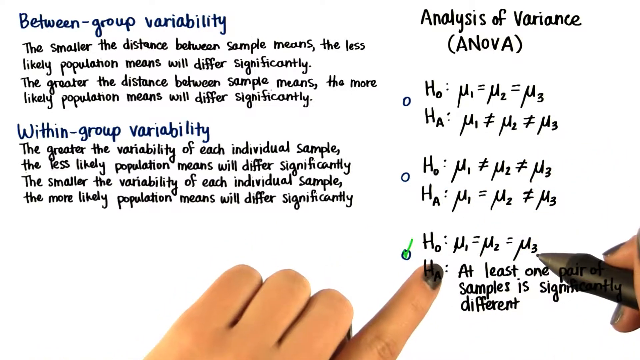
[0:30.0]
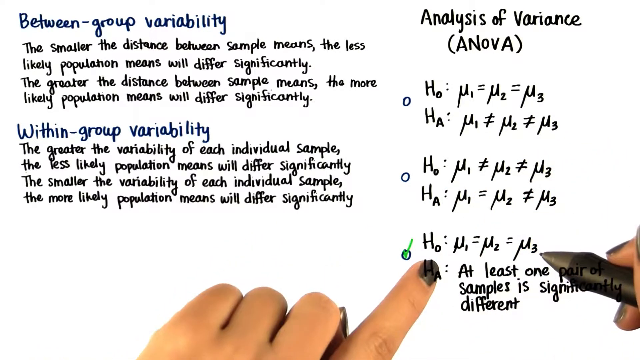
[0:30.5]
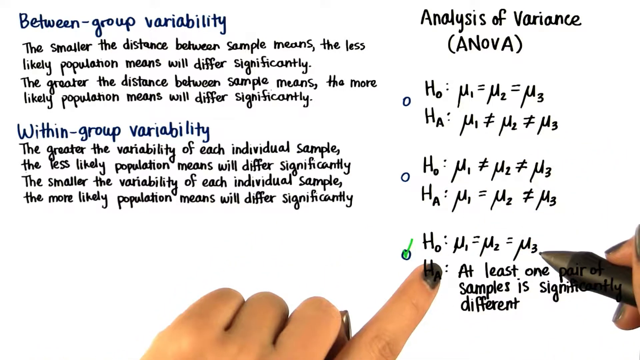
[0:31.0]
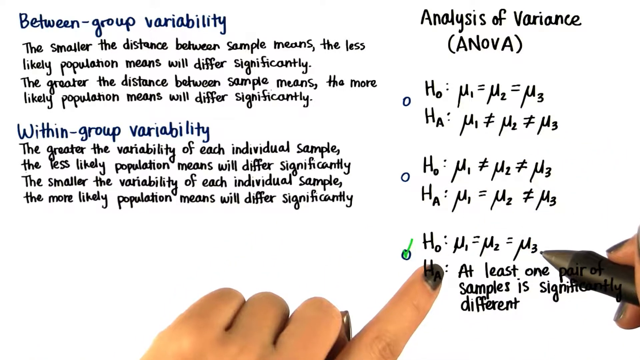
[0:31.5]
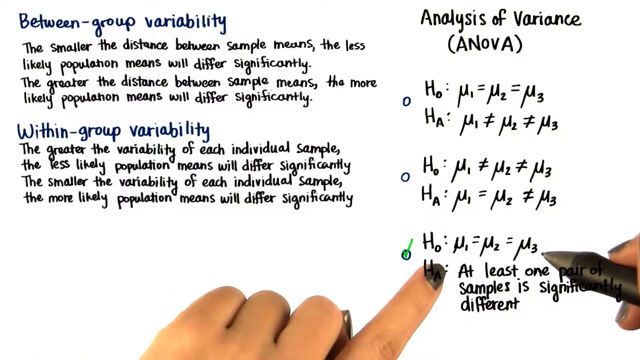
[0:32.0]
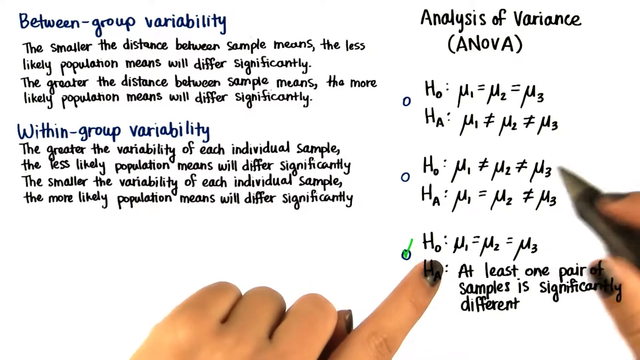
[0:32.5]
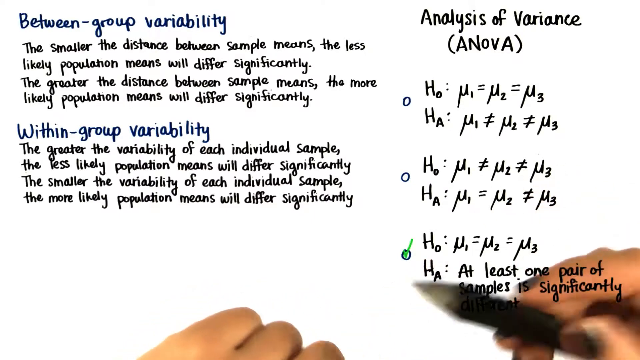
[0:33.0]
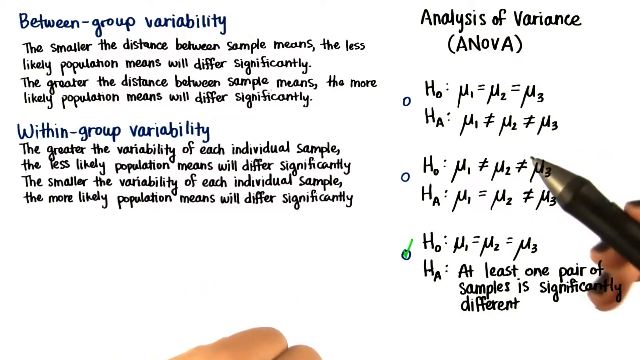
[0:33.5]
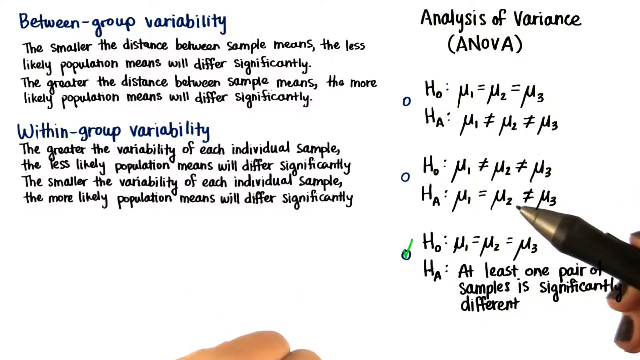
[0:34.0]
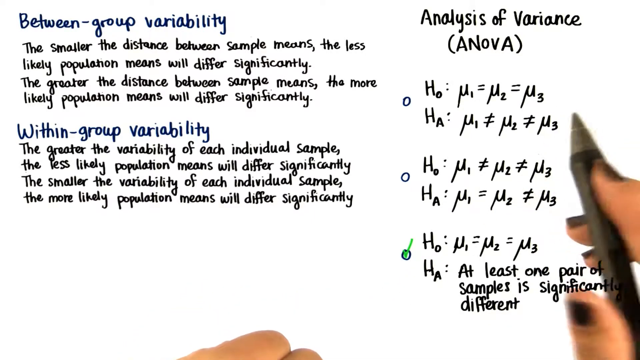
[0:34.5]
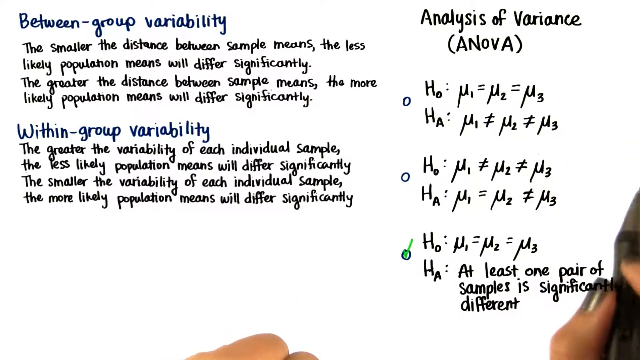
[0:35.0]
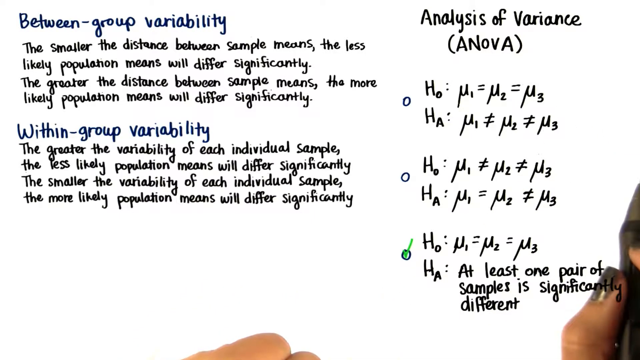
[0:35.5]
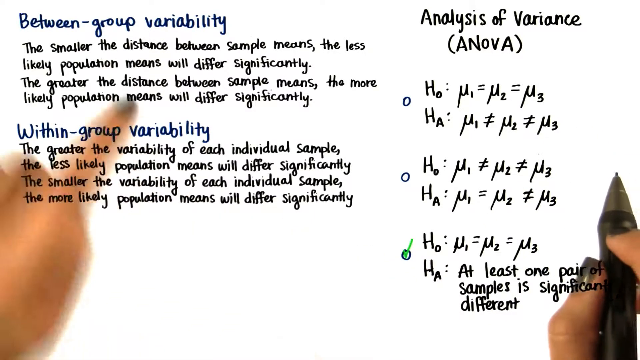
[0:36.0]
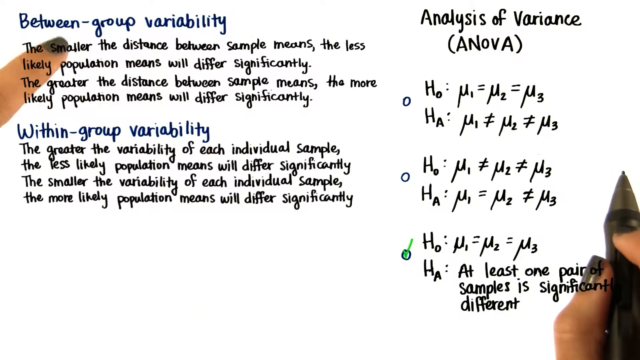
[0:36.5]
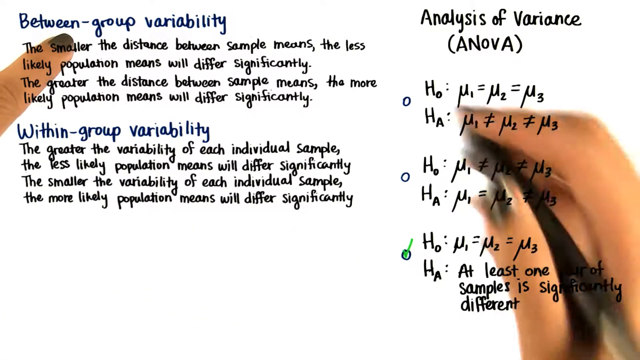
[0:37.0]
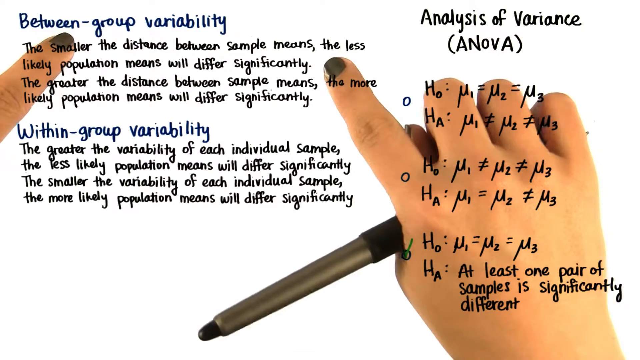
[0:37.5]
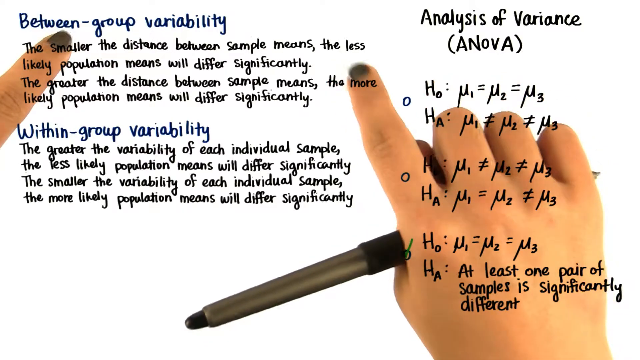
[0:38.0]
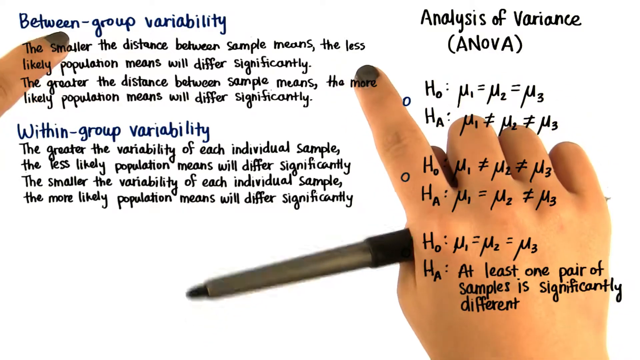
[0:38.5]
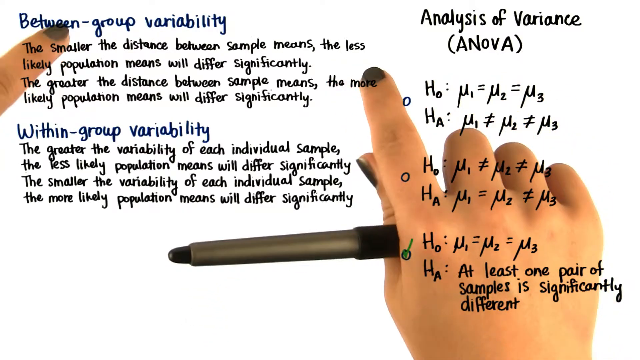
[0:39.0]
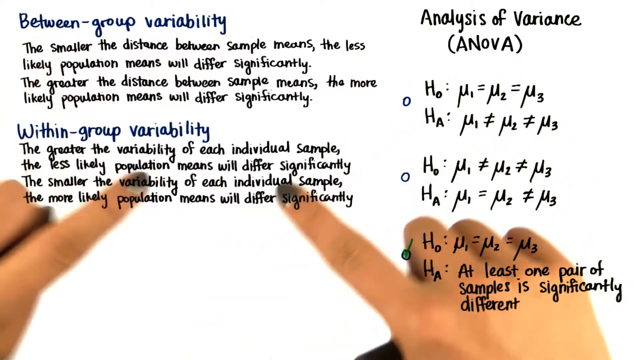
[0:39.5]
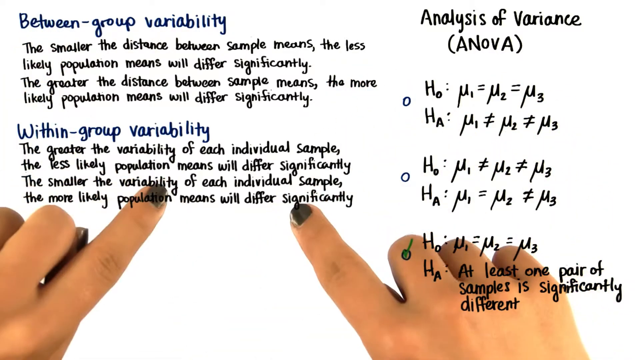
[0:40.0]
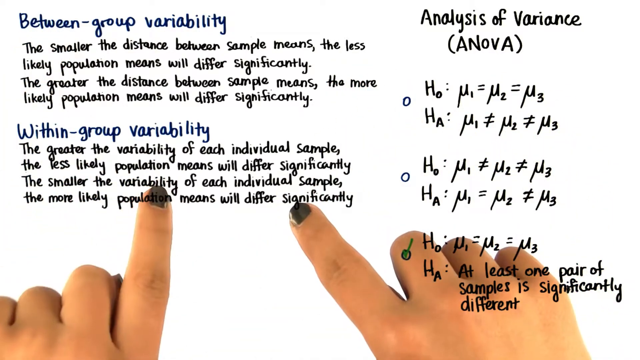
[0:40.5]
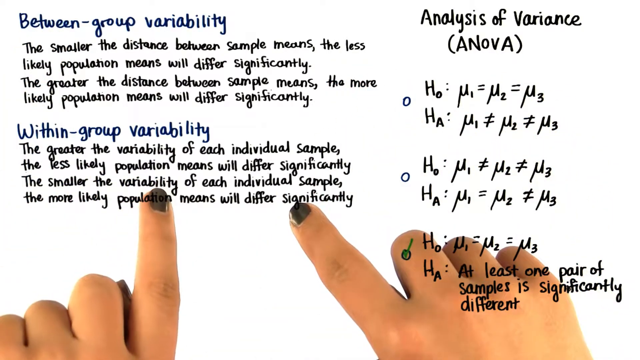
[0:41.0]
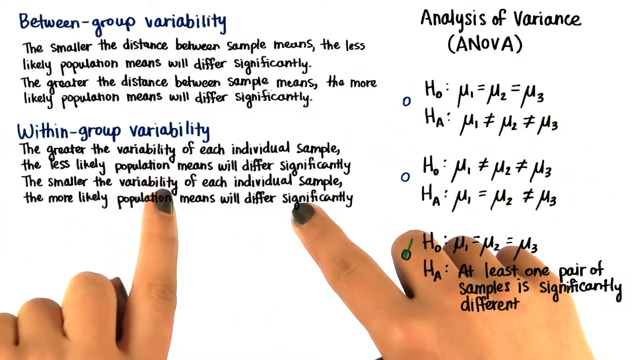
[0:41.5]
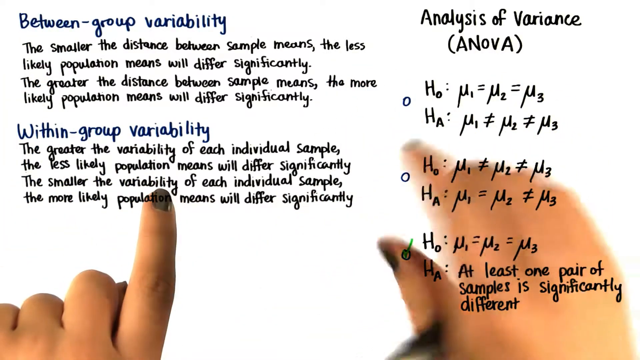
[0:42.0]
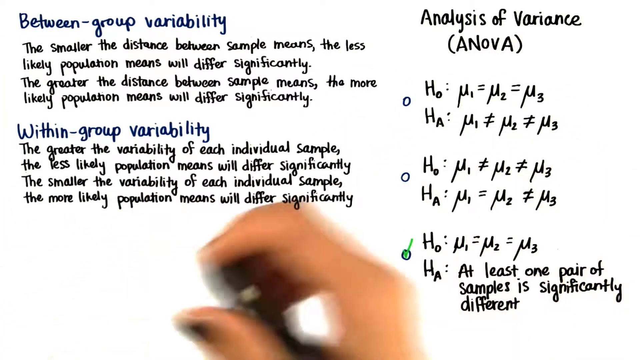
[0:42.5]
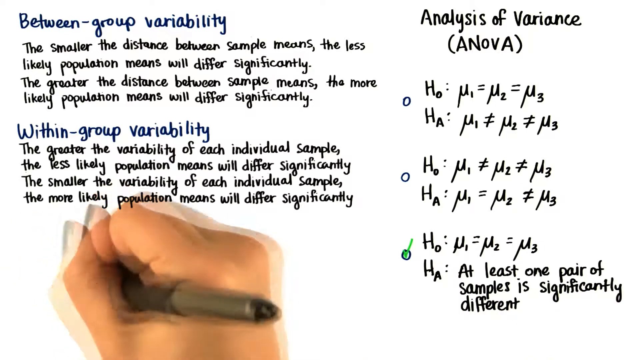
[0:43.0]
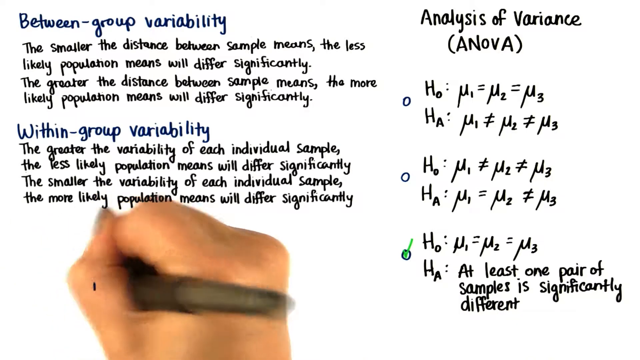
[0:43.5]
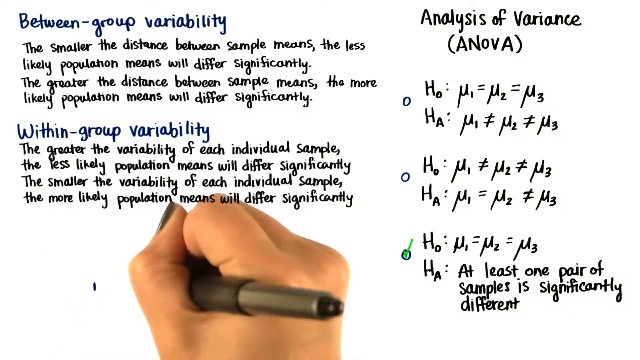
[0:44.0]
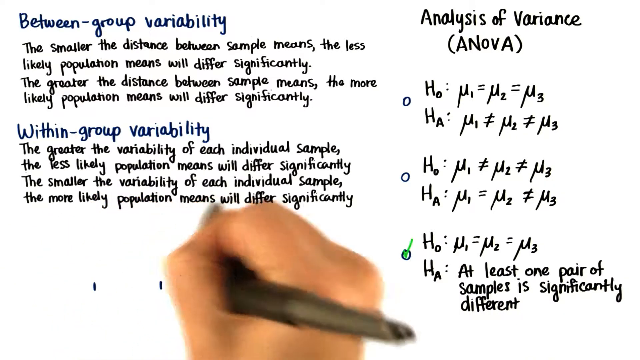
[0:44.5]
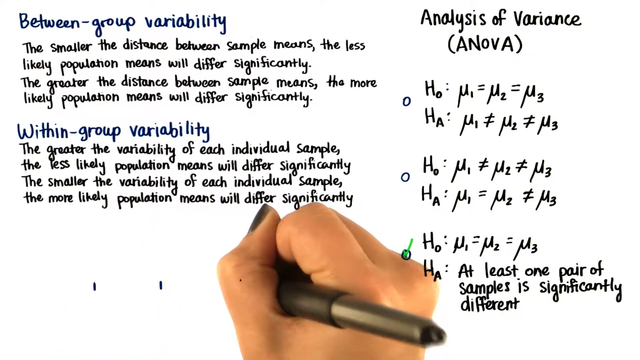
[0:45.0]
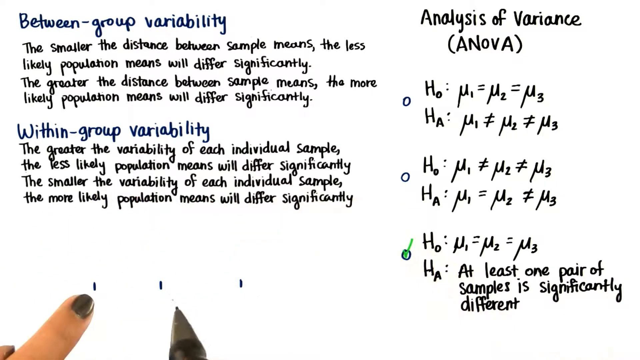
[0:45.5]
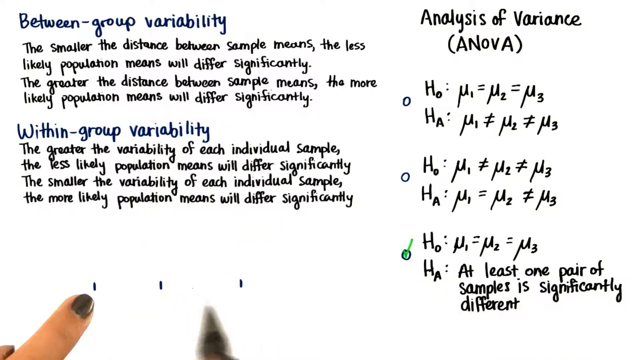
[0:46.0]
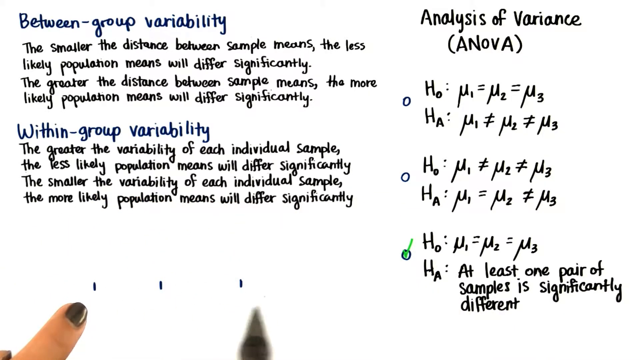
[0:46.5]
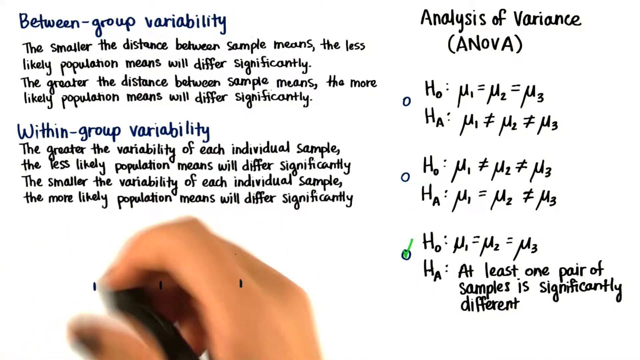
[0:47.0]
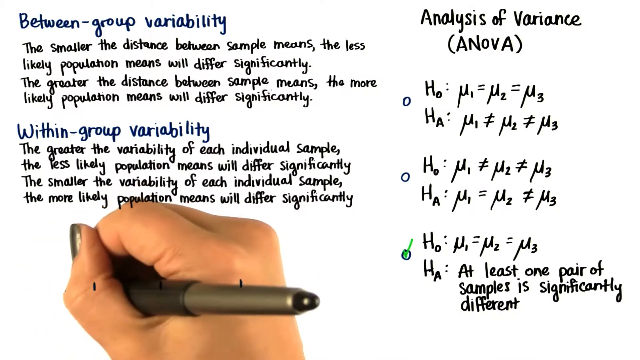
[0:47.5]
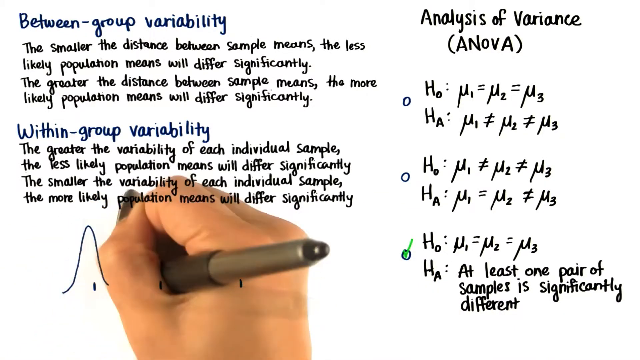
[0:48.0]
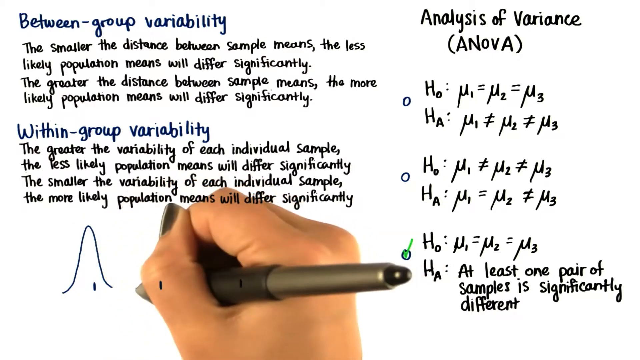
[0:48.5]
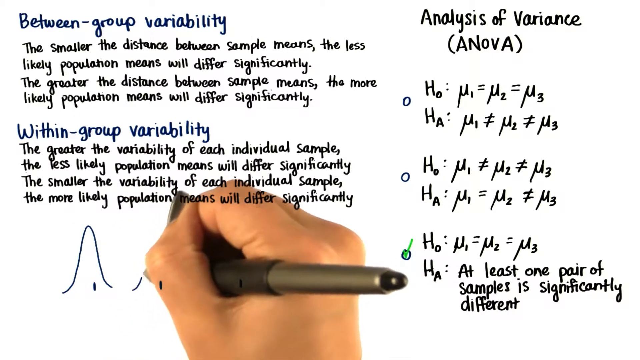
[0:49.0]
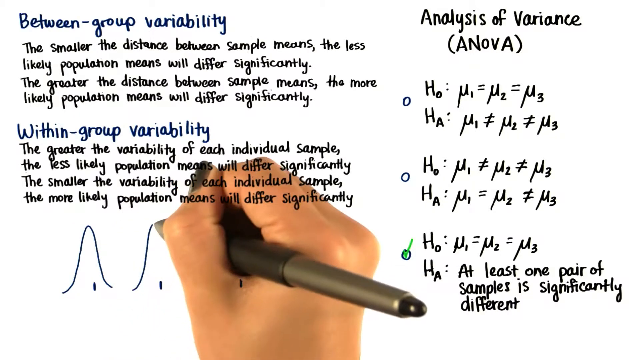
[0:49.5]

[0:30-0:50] The person is still pointing with their left pointer finger at the bottom area near the checkmark. After a fade, the left hand is no longer visible, but the right hand holds the marker in place and points at the bottom area of the right side of the screen by the text. The left hand then comes back on screen and moves up to the top left, pointing at the between group variability text. They move their right hand up and point at the right side of the definition underneath it, all while holding the marker in their right hand, which points outward to their left as they point with their finger. They then bring both hands down and point at the definition underneath within group variability again. Moving their right hand into the open white area underneath the definitions, they draw three small, separated lines, then begin drawing what looks like a big hill or curved line above each one. The shot ends while they are drawing the second curved line.